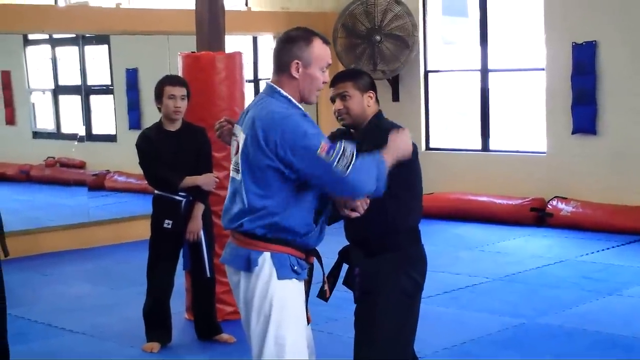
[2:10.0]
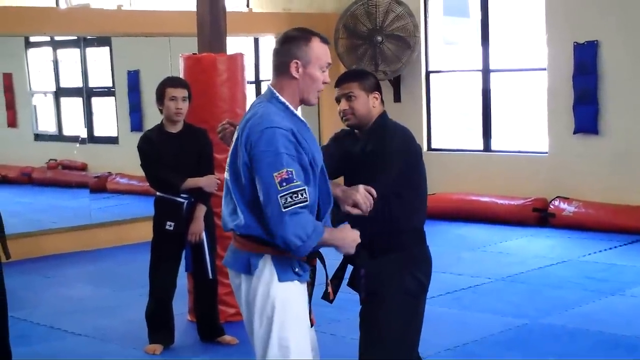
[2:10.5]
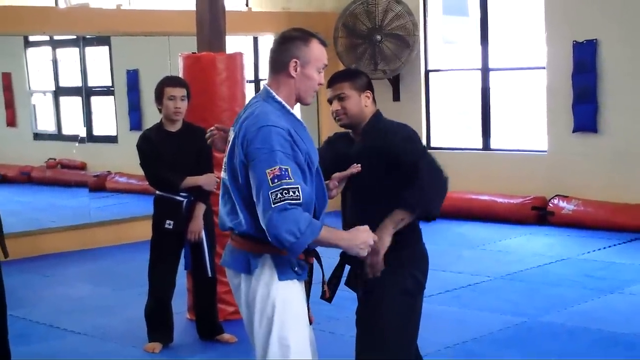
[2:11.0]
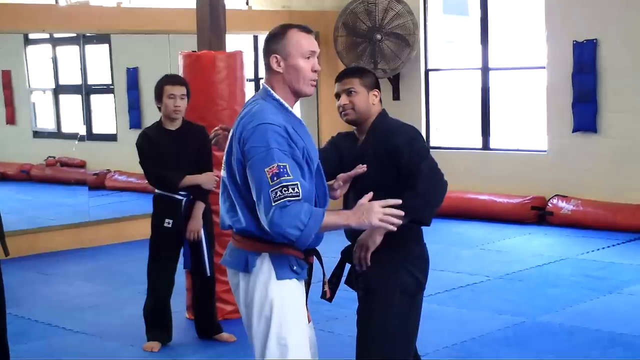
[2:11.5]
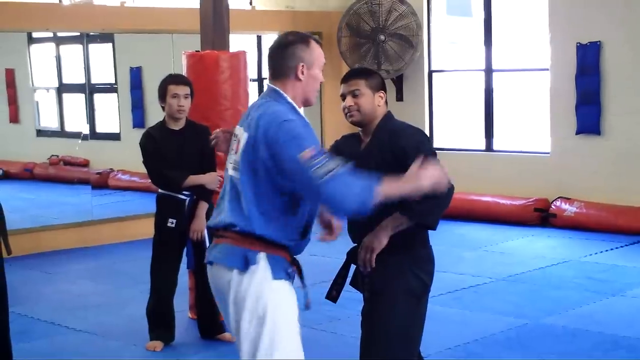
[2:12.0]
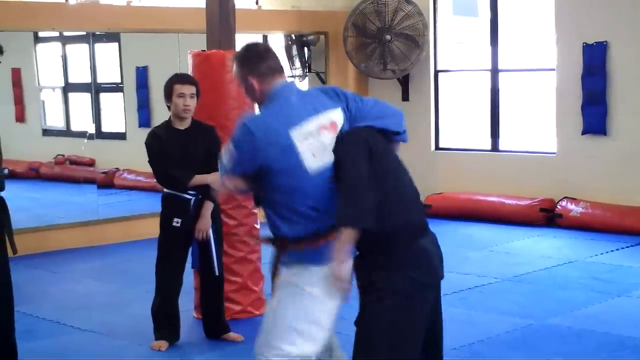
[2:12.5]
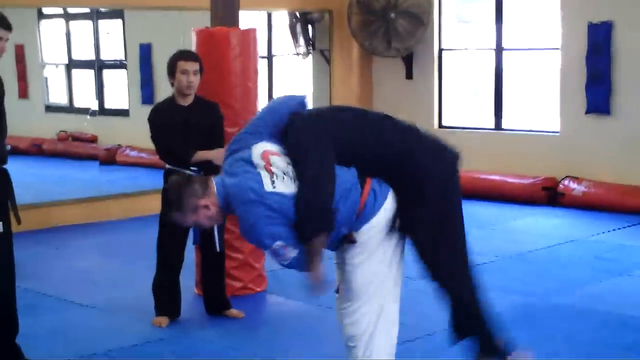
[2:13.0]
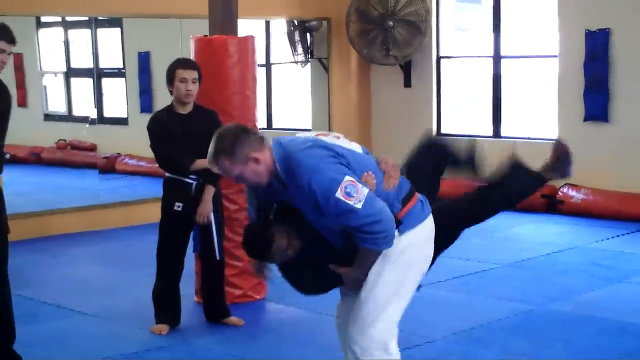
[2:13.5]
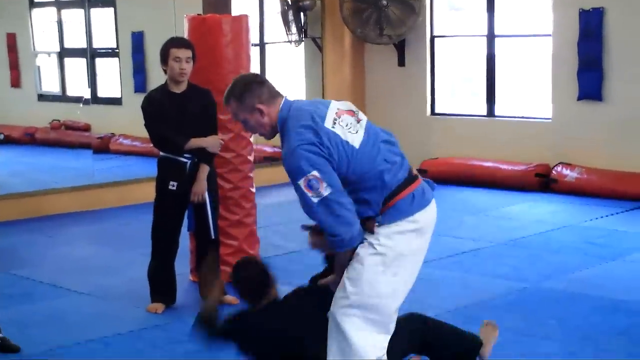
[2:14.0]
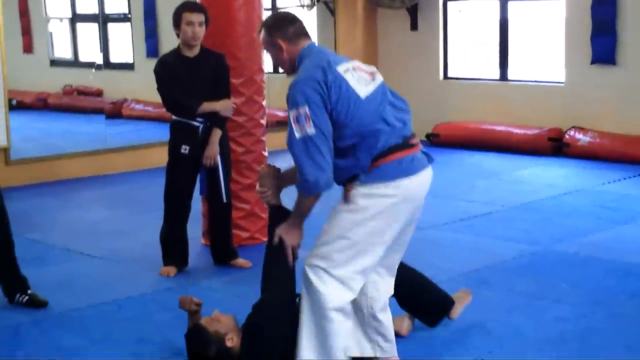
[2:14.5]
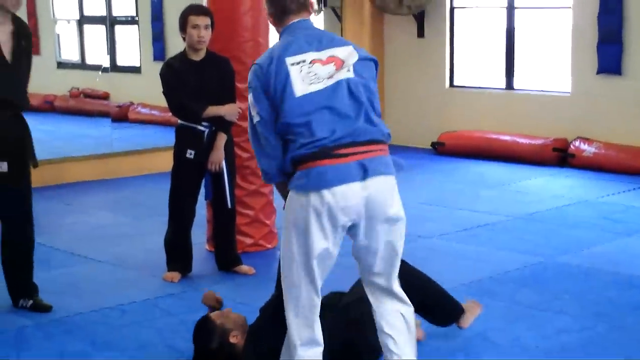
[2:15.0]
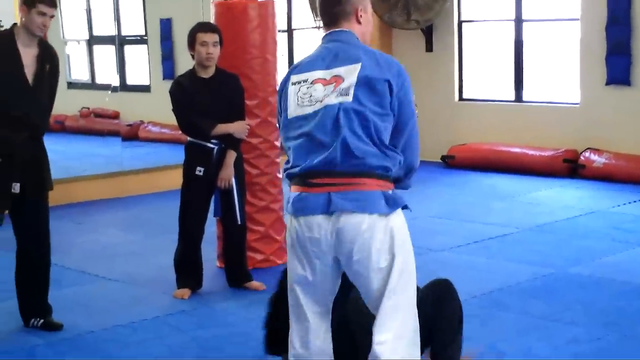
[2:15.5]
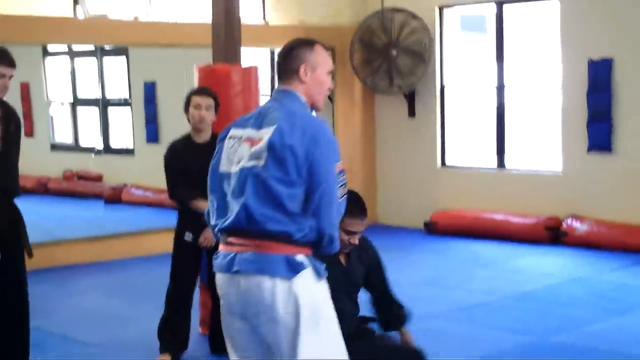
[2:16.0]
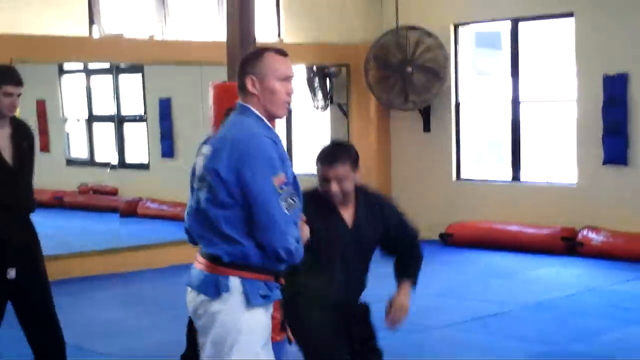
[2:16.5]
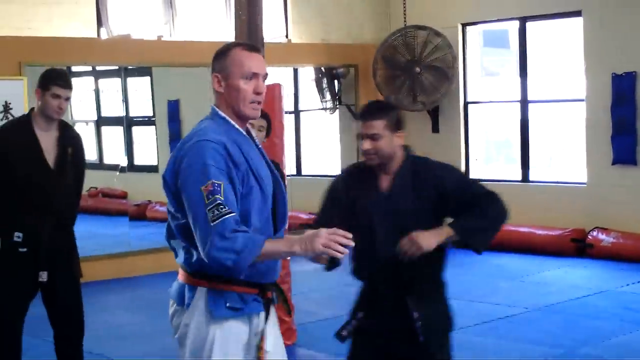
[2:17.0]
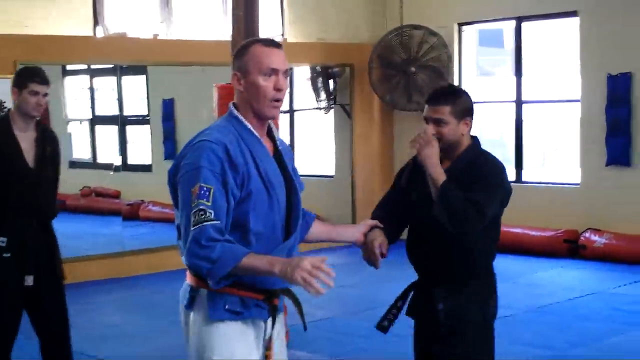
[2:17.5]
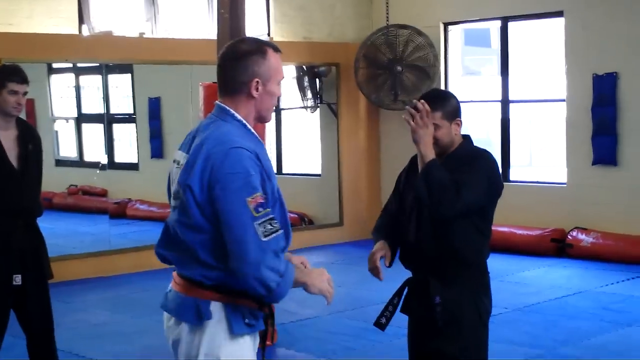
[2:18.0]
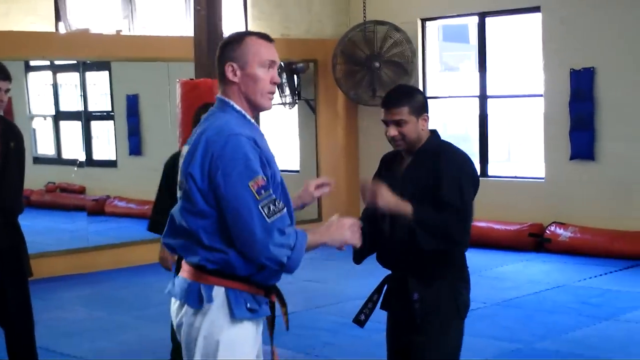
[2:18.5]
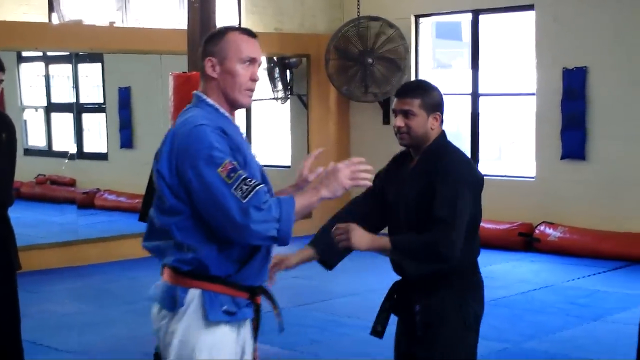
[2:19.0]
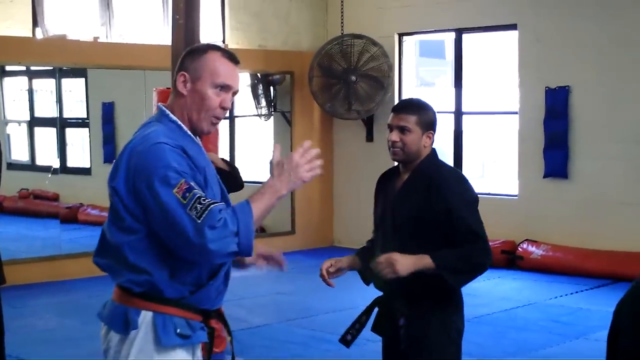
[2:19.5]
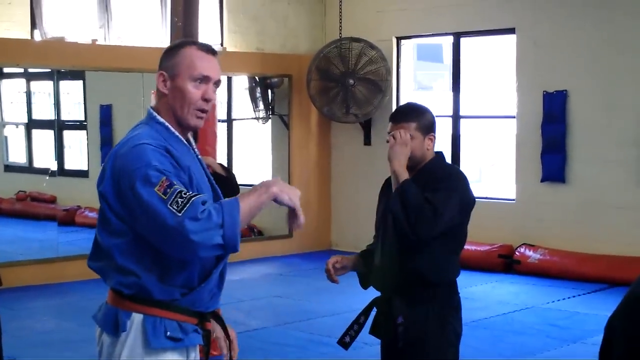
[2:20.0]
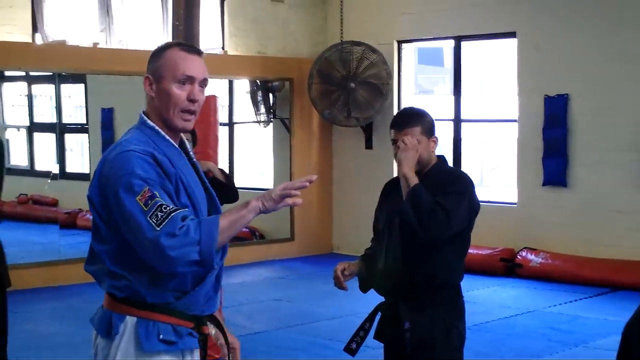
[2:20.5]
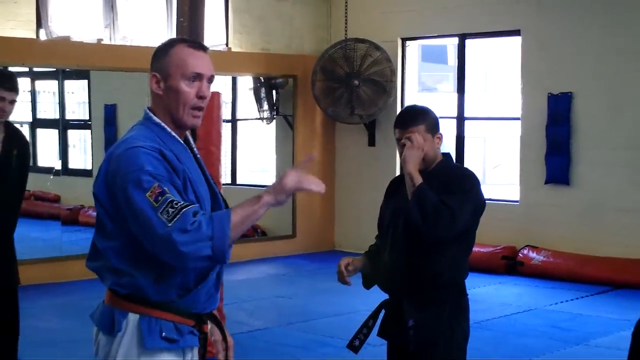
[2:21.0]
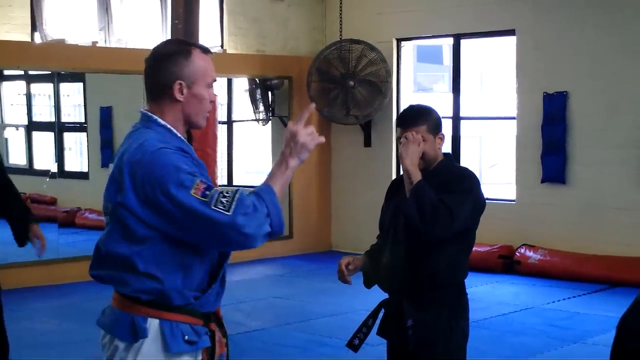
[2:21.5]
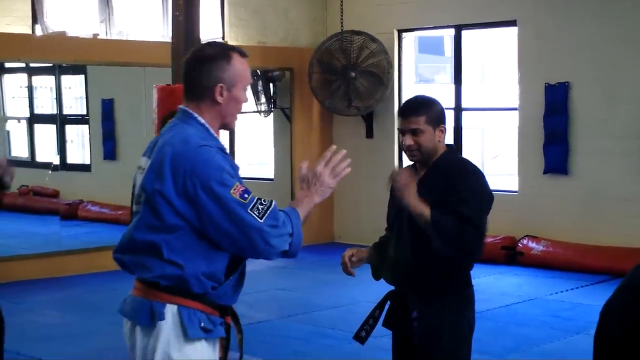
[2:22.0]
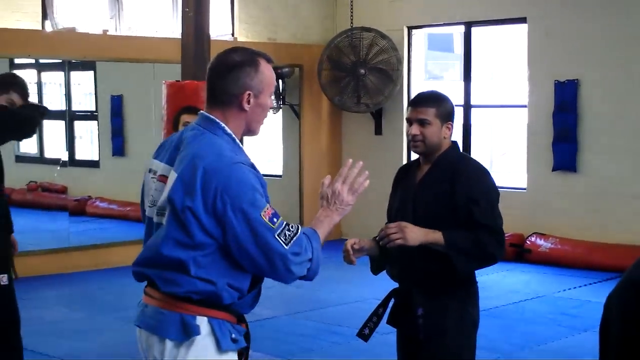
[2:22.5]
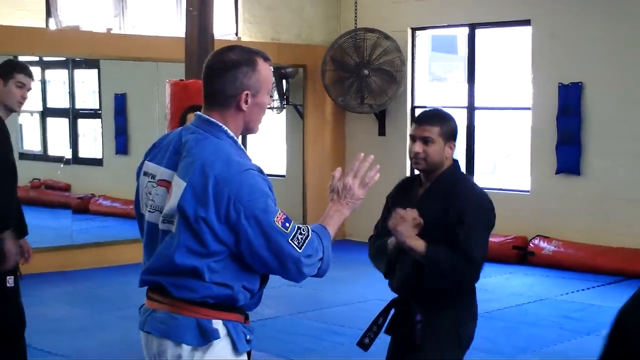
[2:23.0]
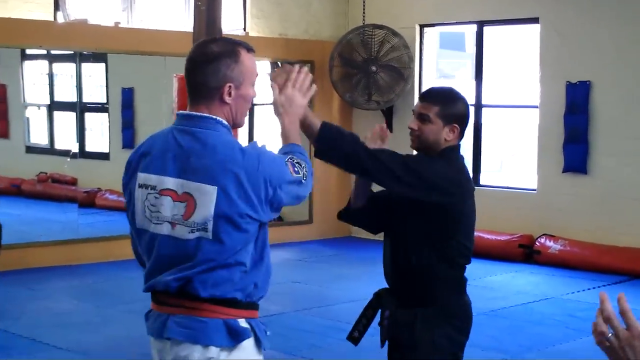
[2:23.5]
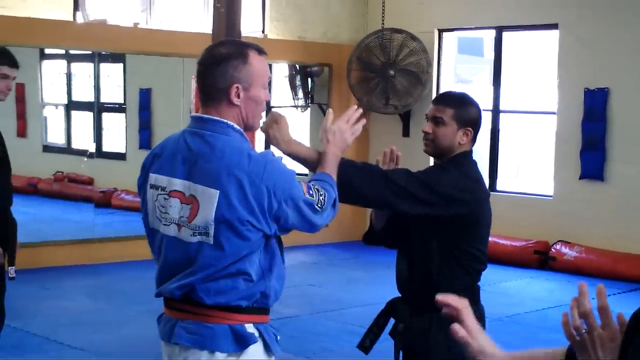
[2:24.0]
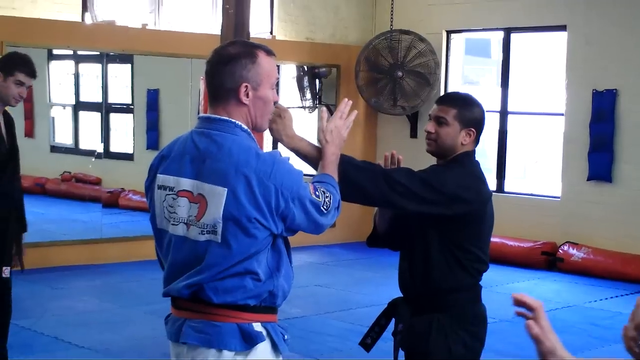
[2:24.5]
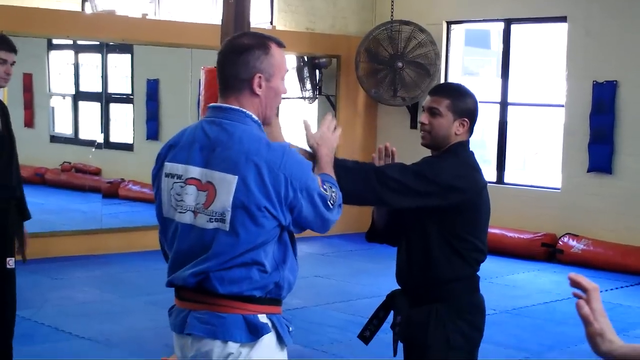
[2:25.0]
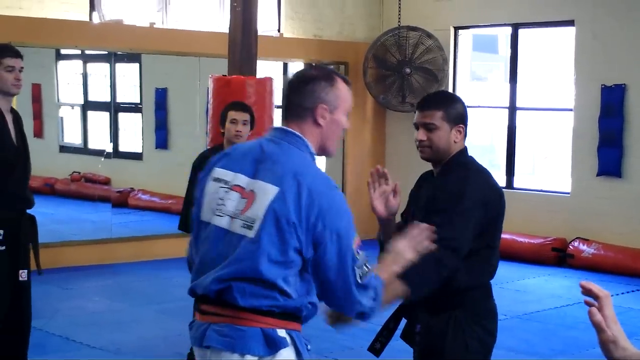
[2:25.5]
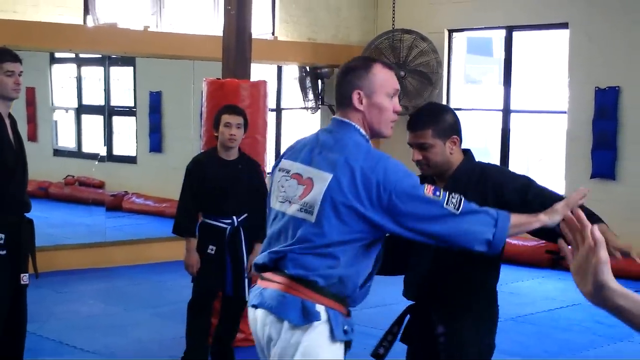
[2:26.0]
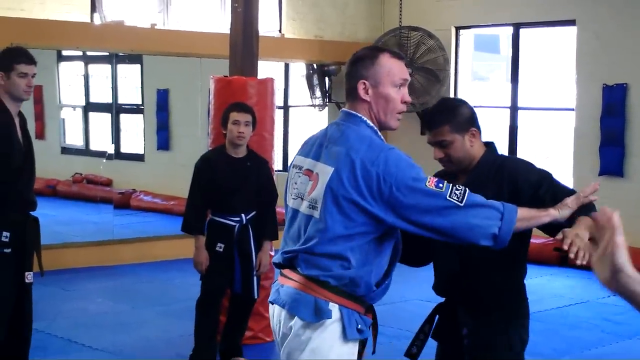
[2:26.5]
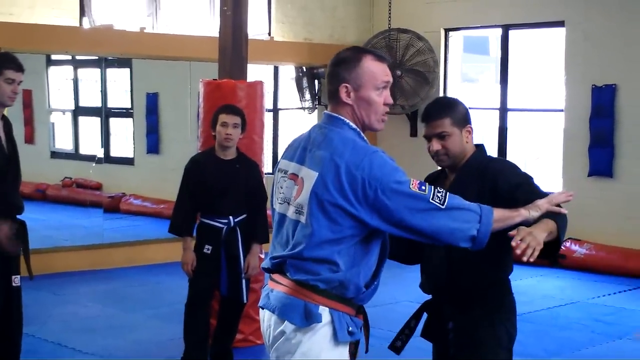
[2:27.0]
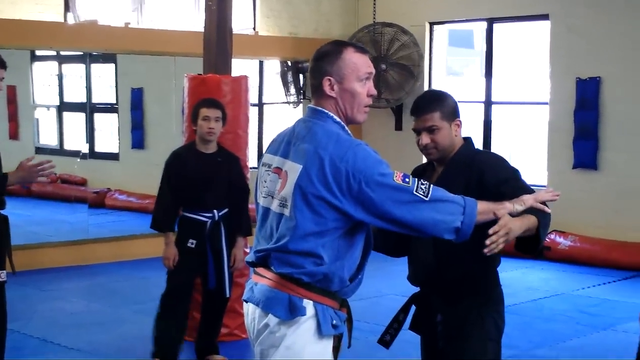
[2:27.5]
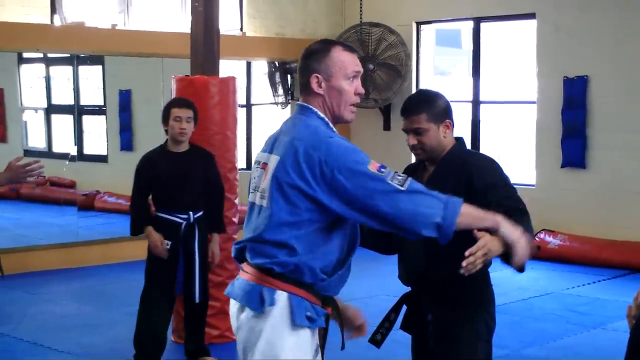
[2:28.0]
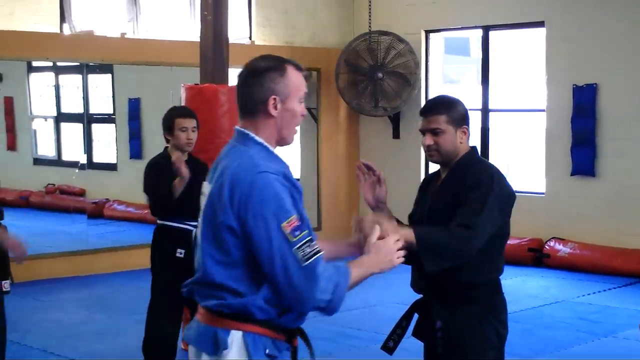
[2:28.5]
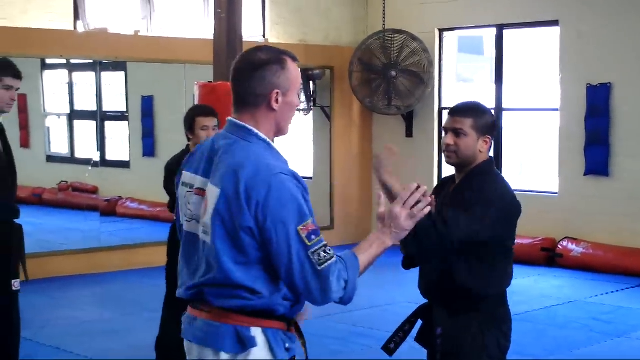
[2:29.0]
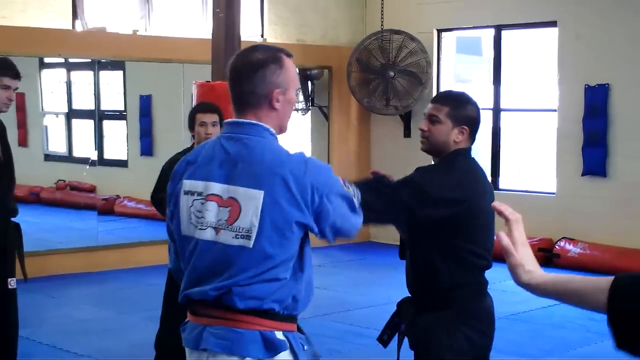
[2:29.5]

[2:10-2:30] An instructor demonstrates a lesson to a martial arts class using a student, explaining it to the entire class gathered around him. Some students move their positions to see him better, and a hand can be seen coming out from one of them as they try to mimic the lesson. The instructor puts his arm around the model student's head and flips him over, and the student lands on his back on the floor. The student gets up right away, appears to be fine, and touches his face. The floor is padded and blue, with padding around a column and underneath the window. The students wear black with belts of various colors according to their ability. One wall of the gym is mirrored, and a very large fan is in the corner.